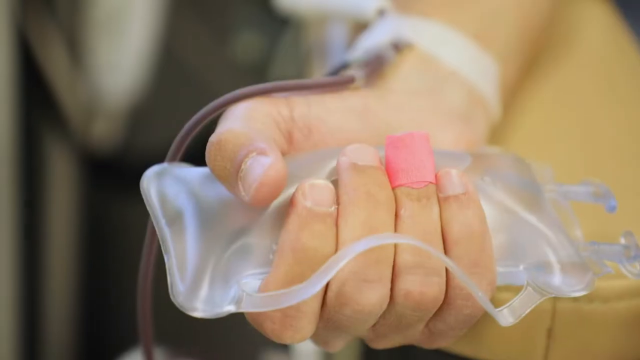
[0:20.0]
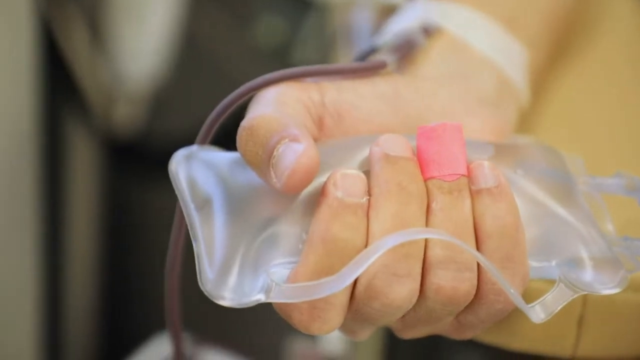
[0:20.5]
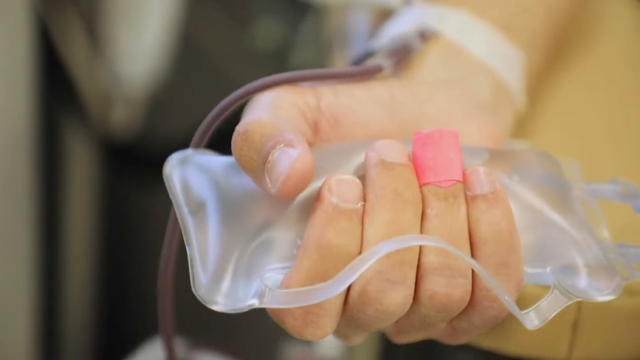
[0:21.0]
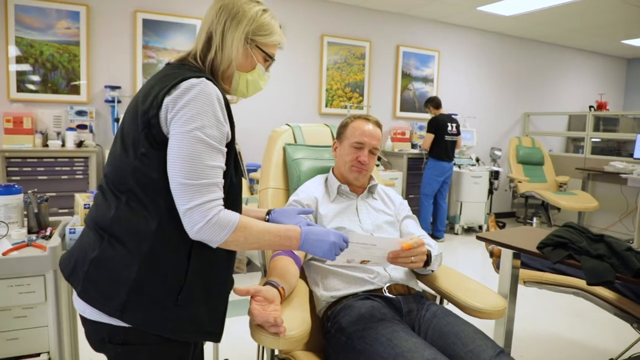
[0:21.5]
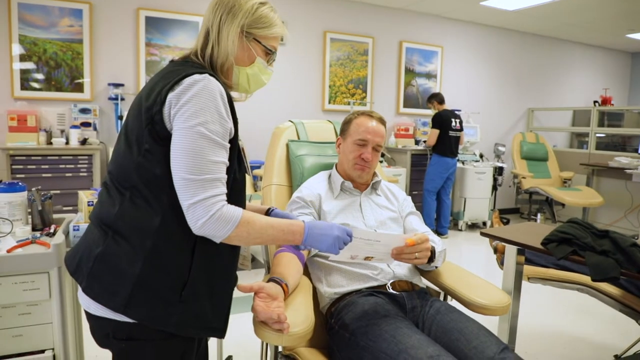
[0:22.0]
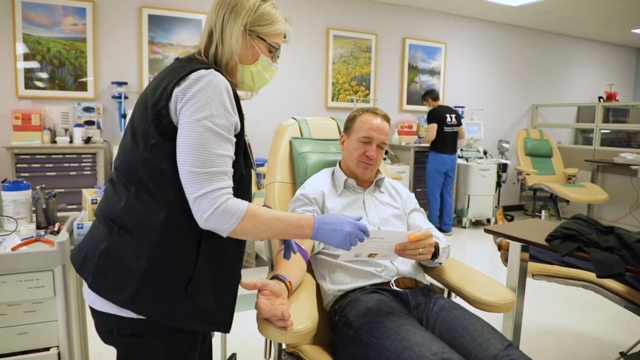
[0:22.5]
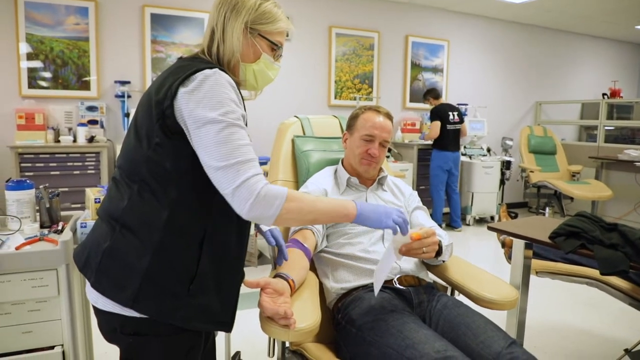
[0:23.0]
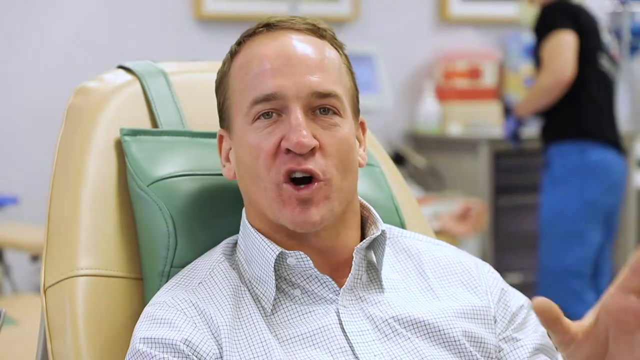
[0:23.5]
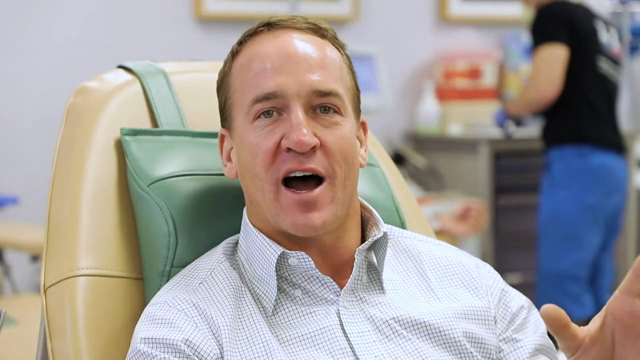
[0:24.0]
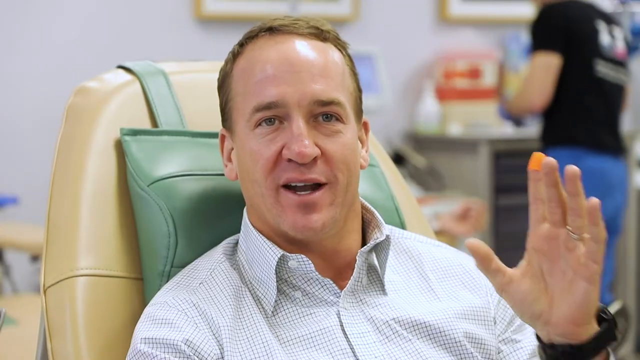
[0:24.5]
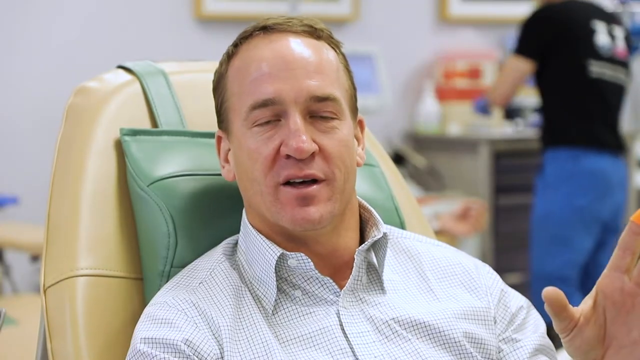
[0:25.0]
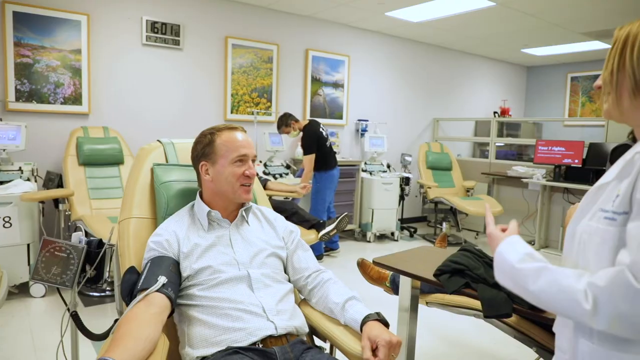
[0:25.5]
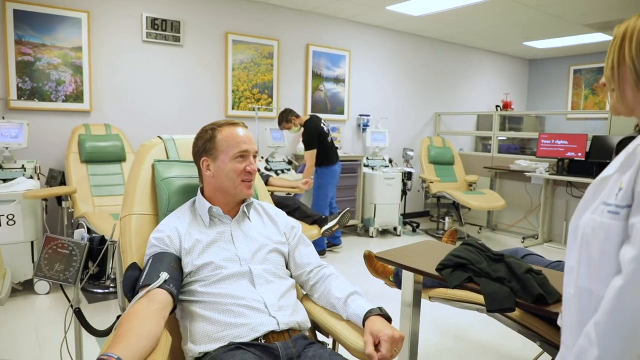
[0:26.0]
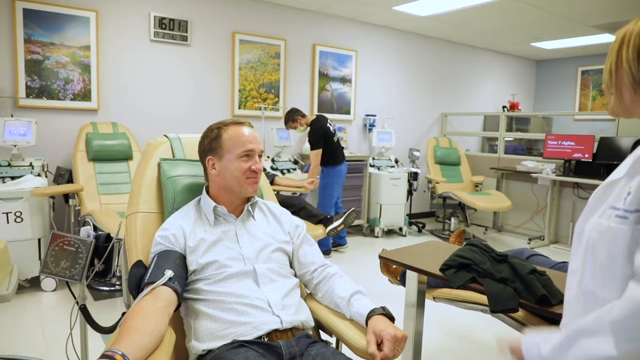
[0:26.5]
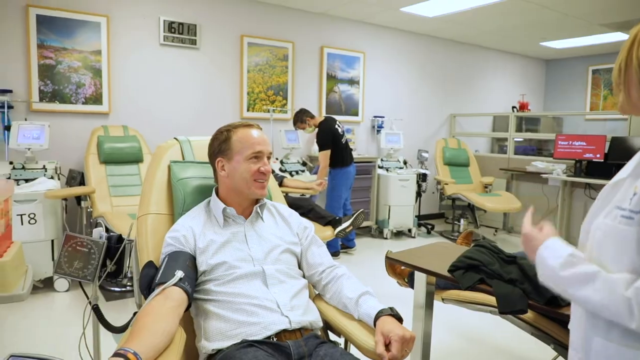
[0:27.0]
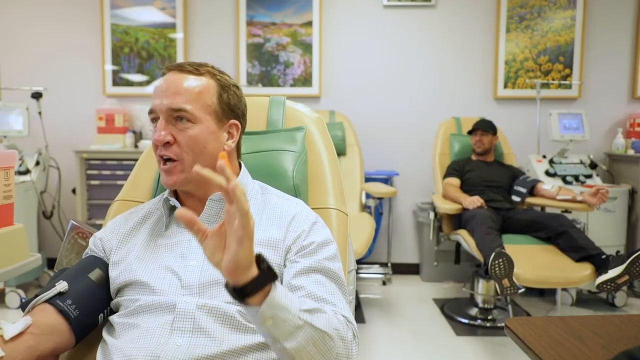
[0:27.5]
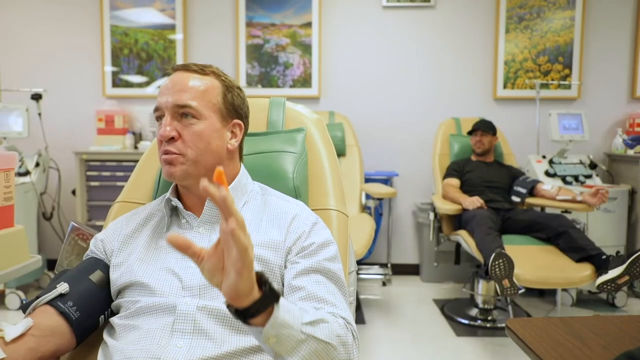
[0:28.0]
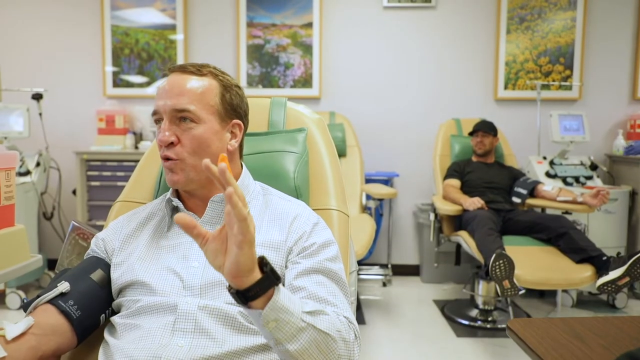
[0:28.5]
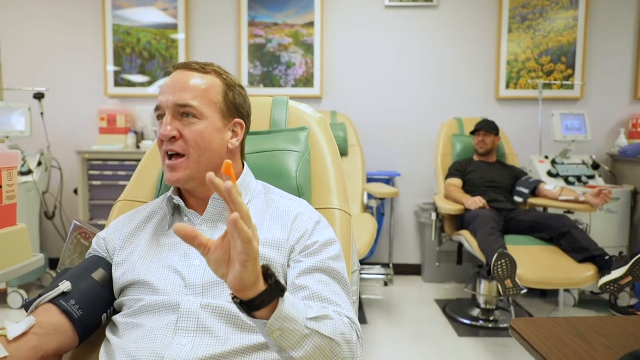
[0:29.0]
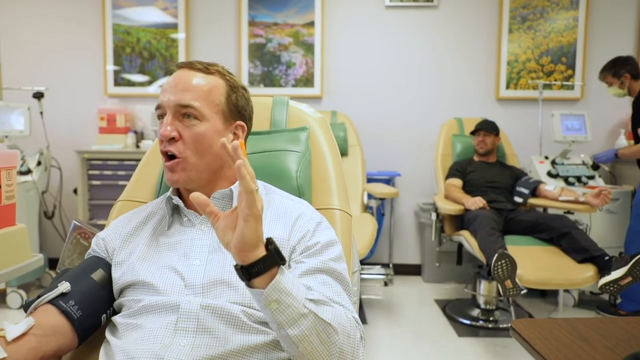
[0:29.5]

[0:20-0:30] Someone's hand holds sort of a plastic see-through container of liquid. Peyton Manning sits in a sort of reclining chair with his arm held out and a purple, sort of rubber thing on his arm, apparently for a blood donation. He now wears only his white shirt; the black shirt is removed and is sitting to the right. The woman in the black vest, white shirt and mask holds some sort of paper up in front of him, he holds the other side of it, and they look at it together. A close-up shows Peyton Manning speaking, and another shot shows him getting his blood pressure taken, with a cuff on his right hand.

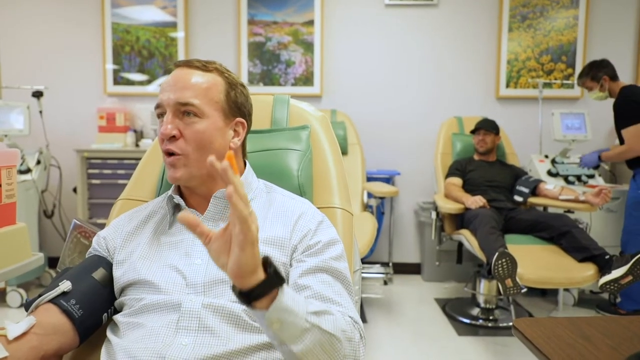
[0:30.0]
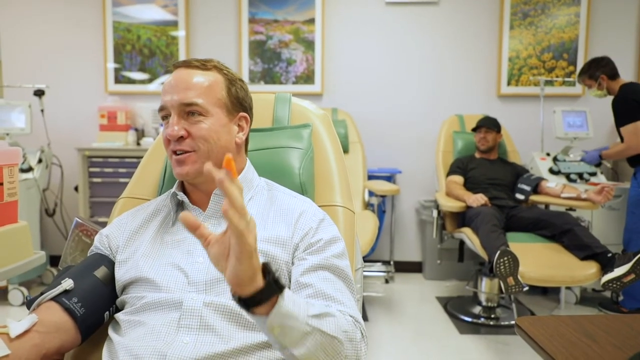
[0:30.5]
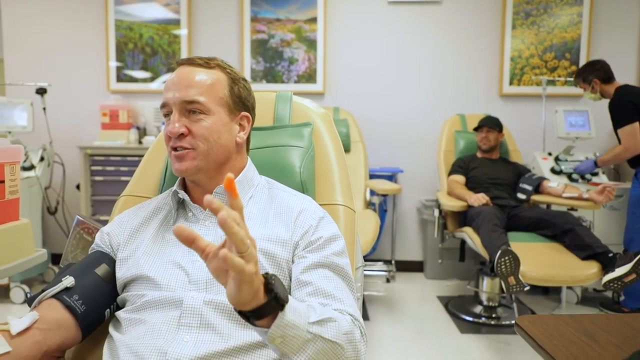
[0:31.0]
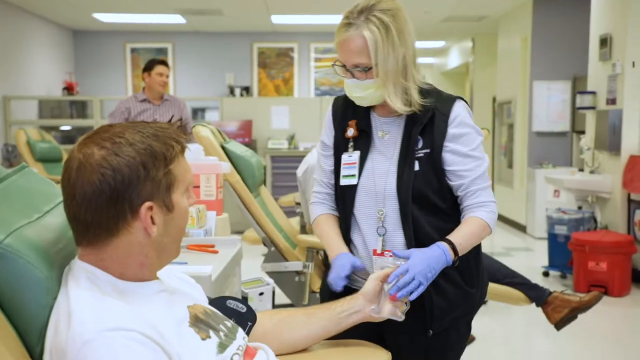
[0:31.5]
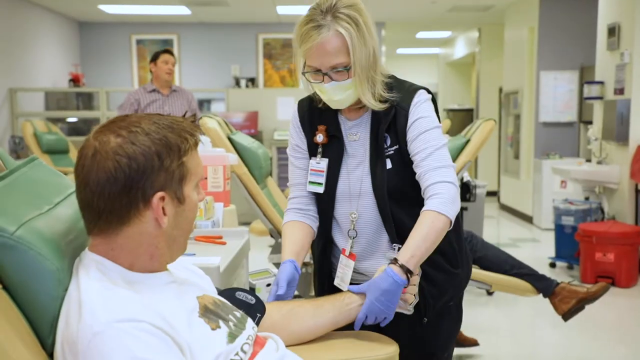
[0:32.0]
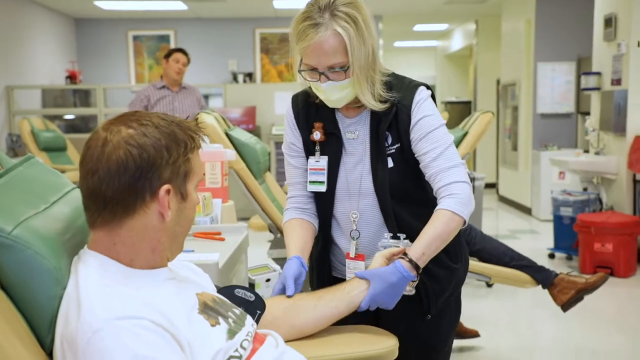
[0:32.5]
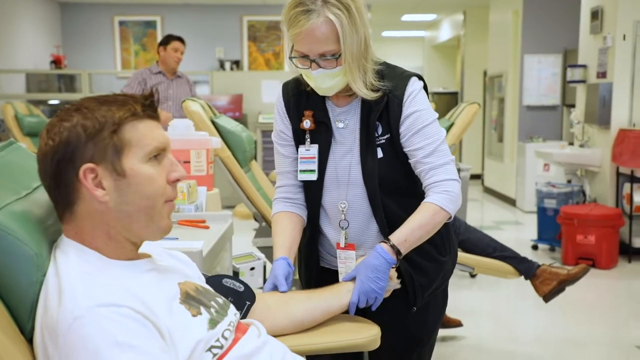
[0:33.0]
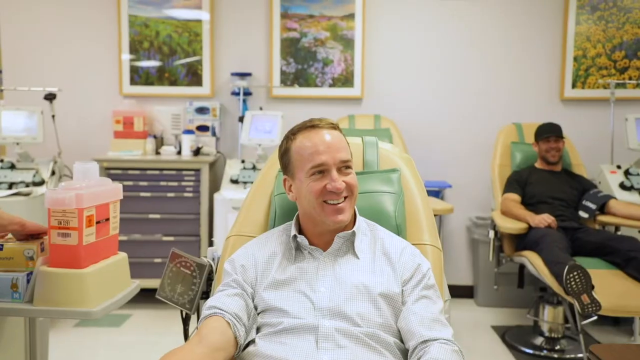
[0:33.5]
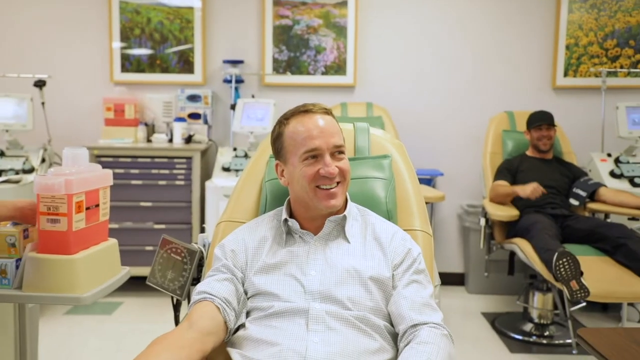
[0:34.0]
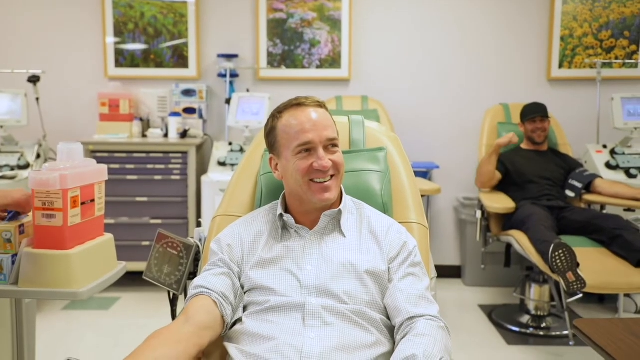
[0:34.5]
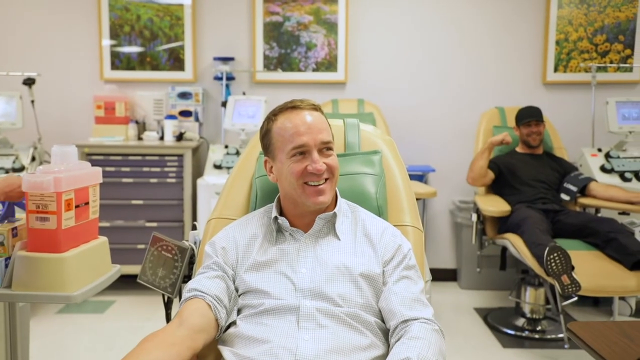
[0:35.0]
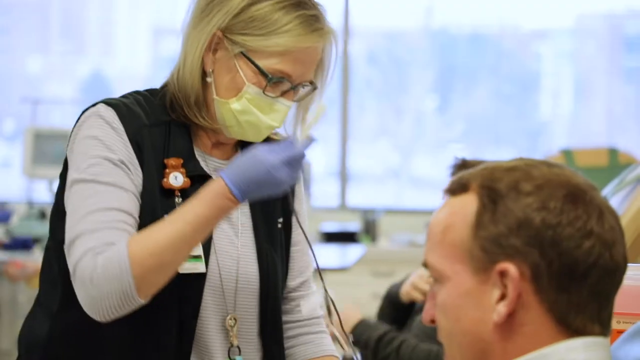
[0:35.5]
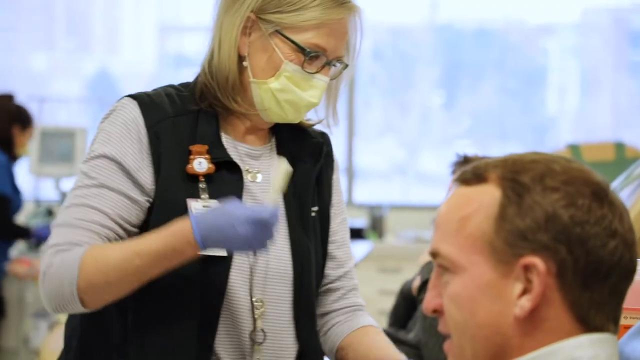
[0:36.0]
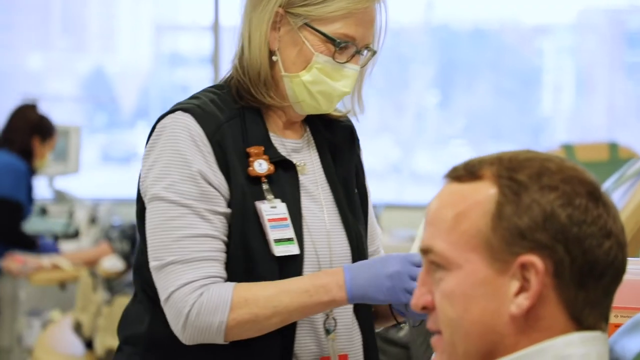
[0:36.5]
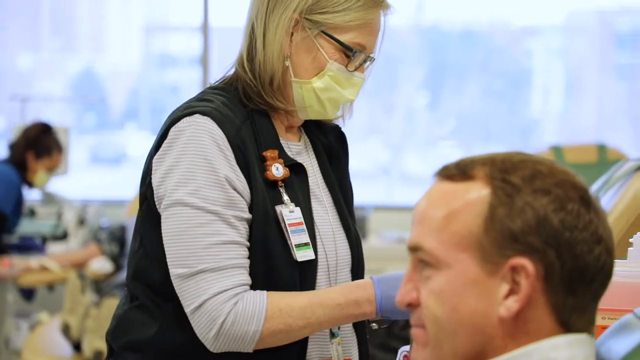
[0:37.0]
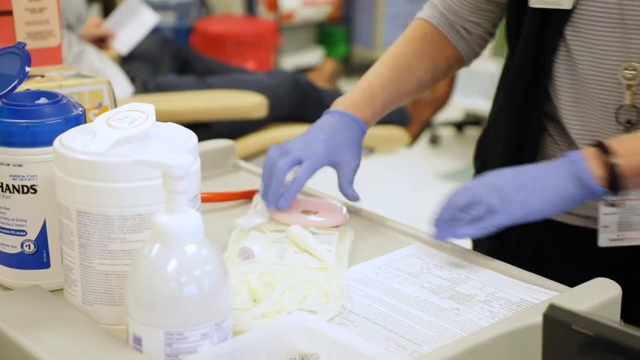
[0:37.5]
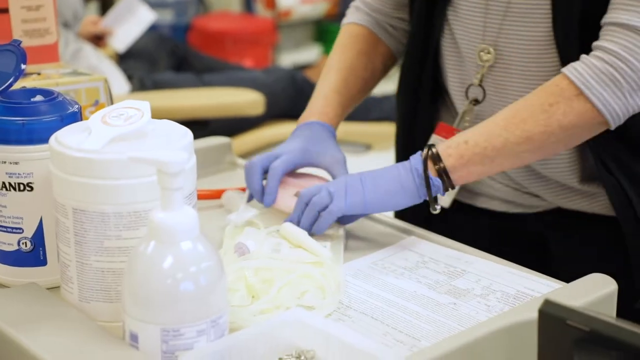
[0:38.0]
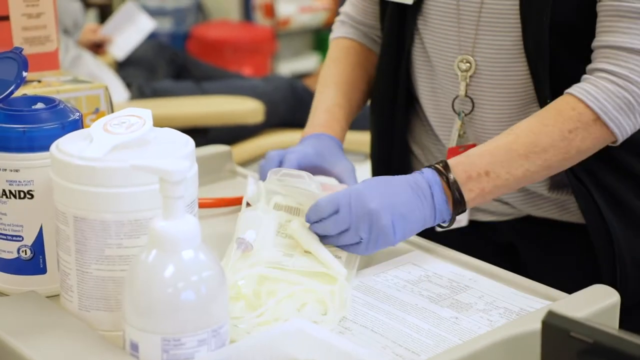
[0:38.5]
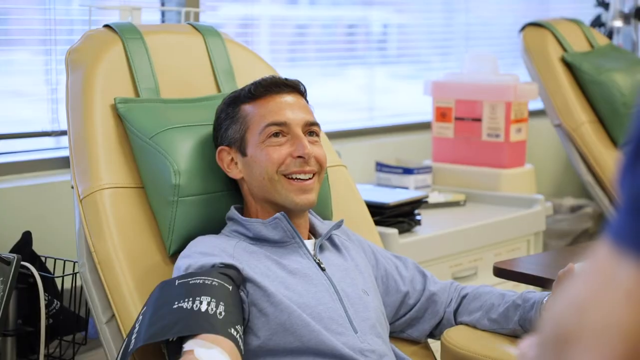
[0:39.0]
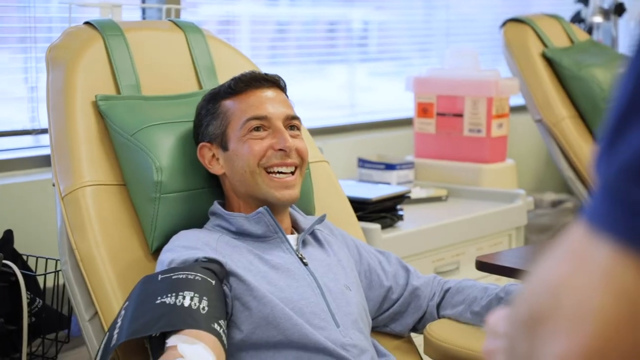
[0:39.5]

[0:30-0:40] A woman puts a sort of plastic bag filled with something in Peyton Manning's left hand and moves his left arm outward slightly. In another shot, Peyton Manning is on the right, and in the back a man dressed in black short sleeves and a black baseball cap flexes his right arm, apparently trying to show off. The woman standing before Peyton Manning has a tube and then does something behind him. Someone wearing purple gloves picks up something and puts it in a plastic see-through bag. Another man sits in his chair with a kind of pressure cuff on his right arm, smiling and leaning his head back.